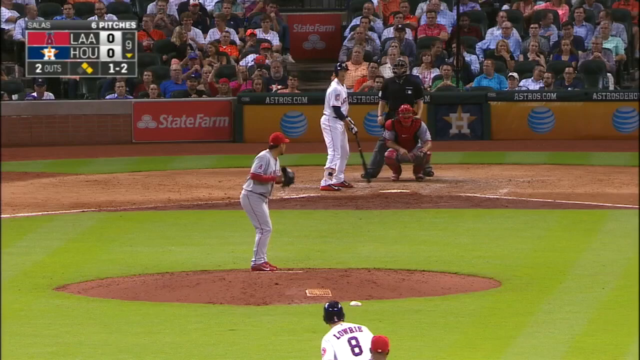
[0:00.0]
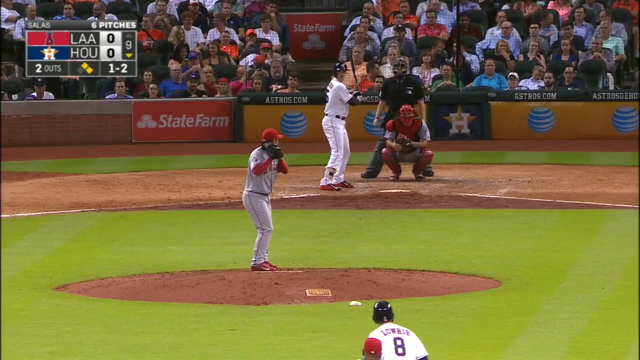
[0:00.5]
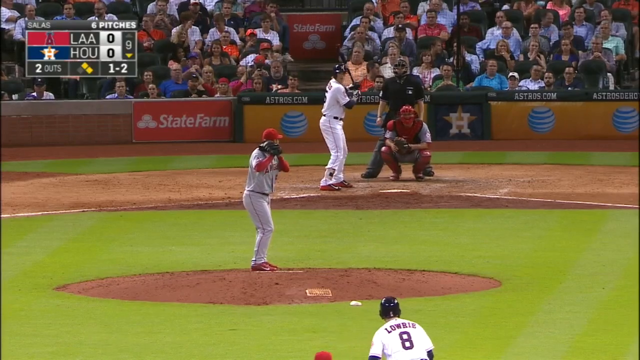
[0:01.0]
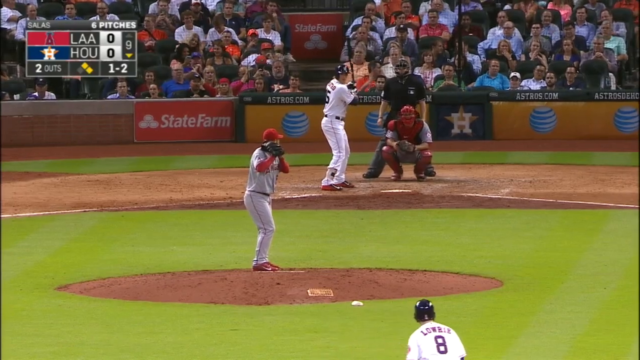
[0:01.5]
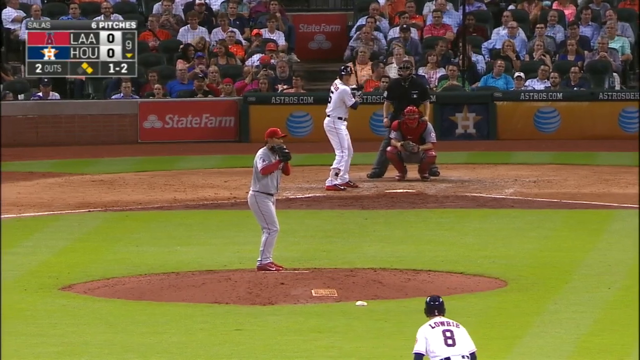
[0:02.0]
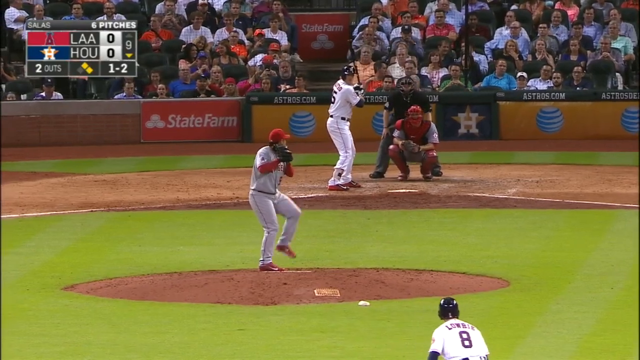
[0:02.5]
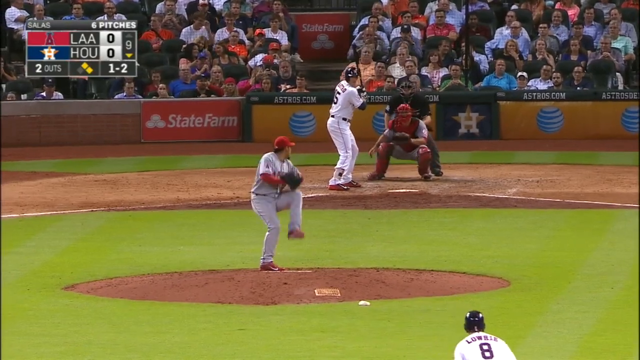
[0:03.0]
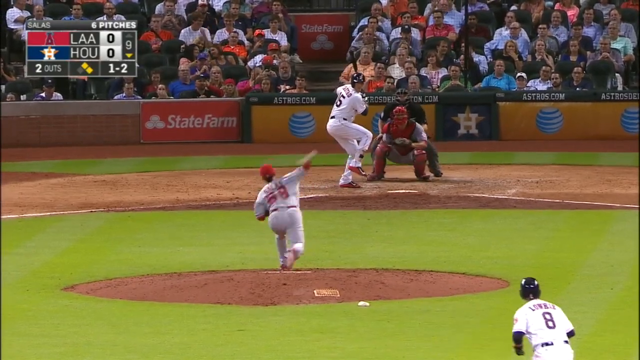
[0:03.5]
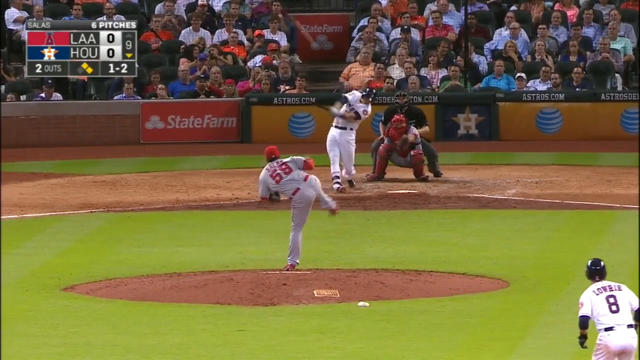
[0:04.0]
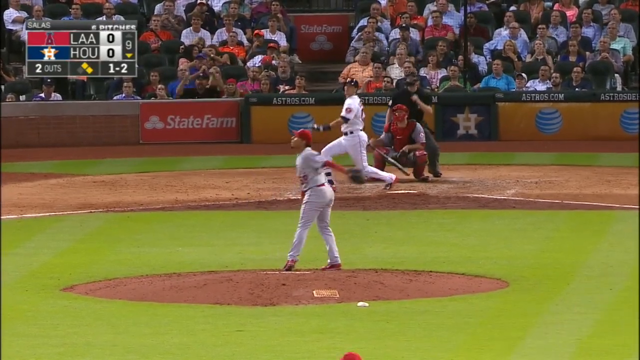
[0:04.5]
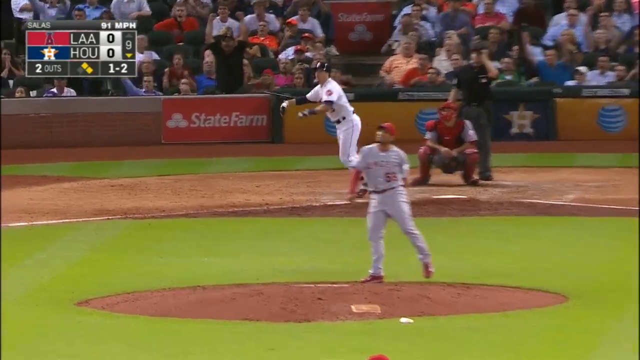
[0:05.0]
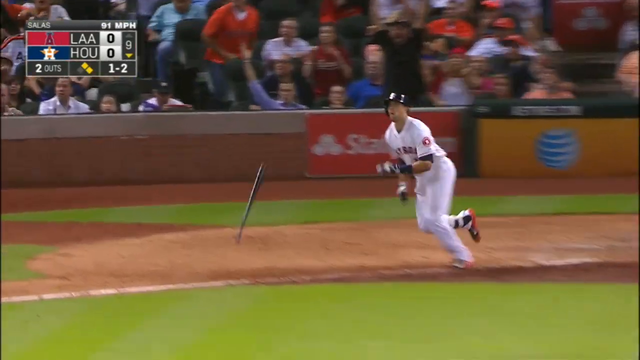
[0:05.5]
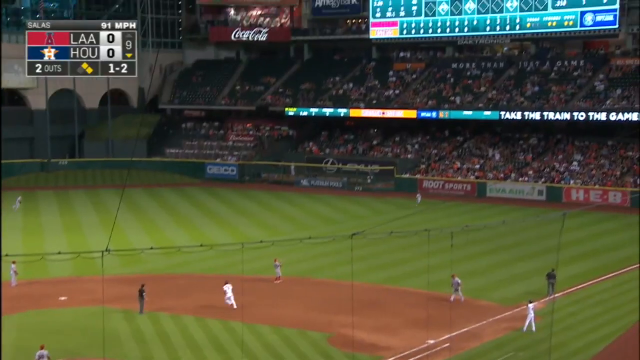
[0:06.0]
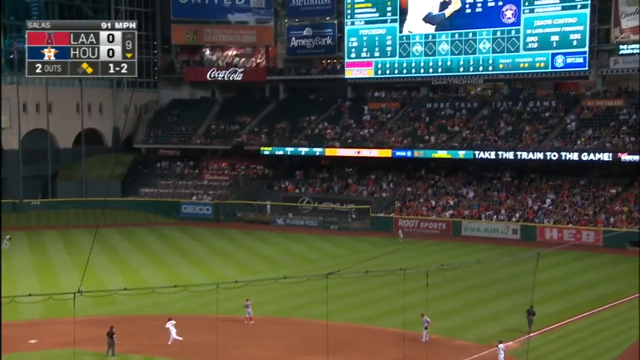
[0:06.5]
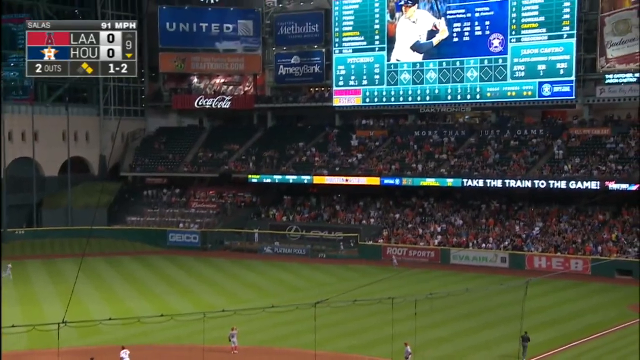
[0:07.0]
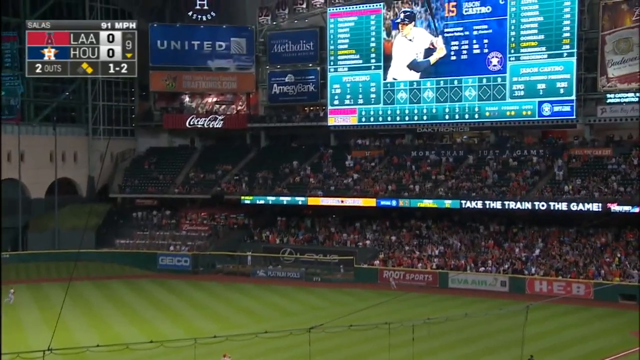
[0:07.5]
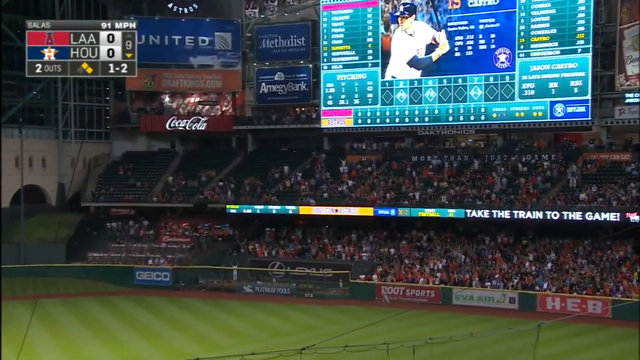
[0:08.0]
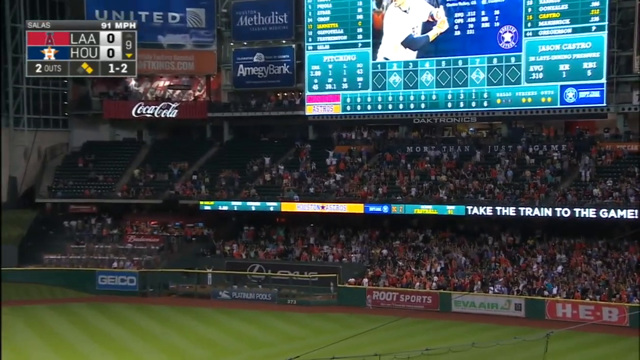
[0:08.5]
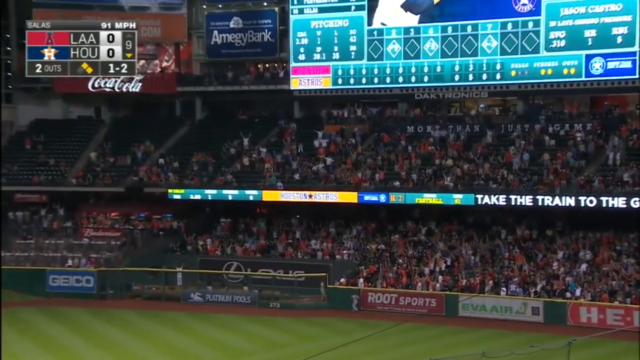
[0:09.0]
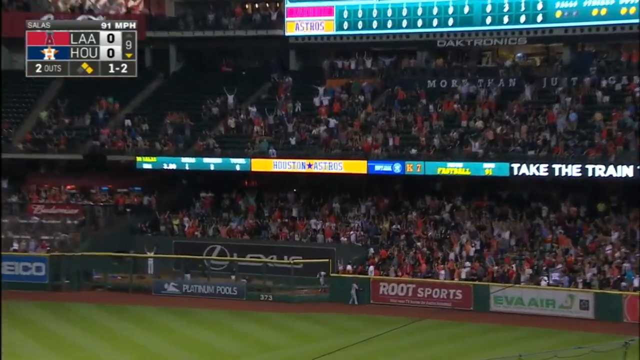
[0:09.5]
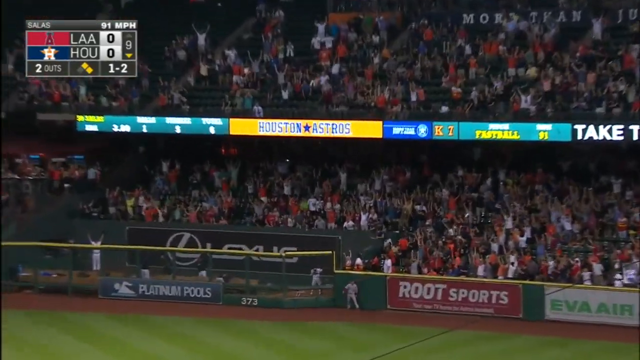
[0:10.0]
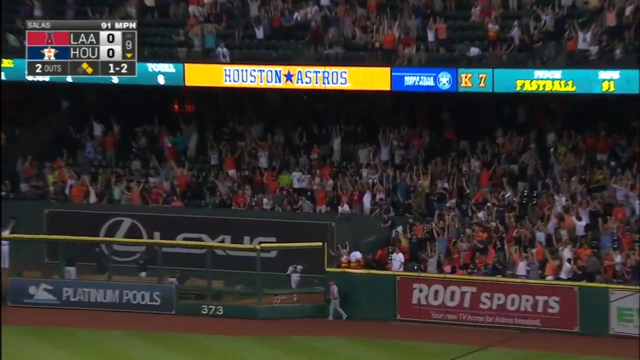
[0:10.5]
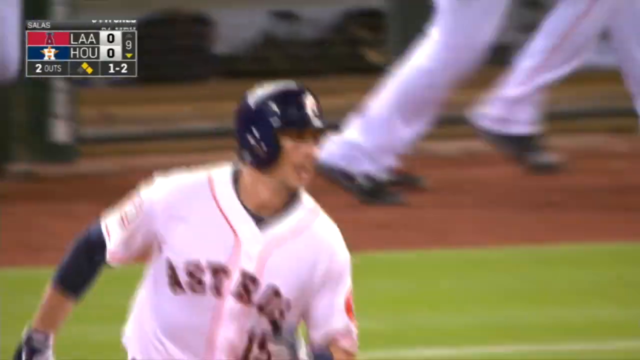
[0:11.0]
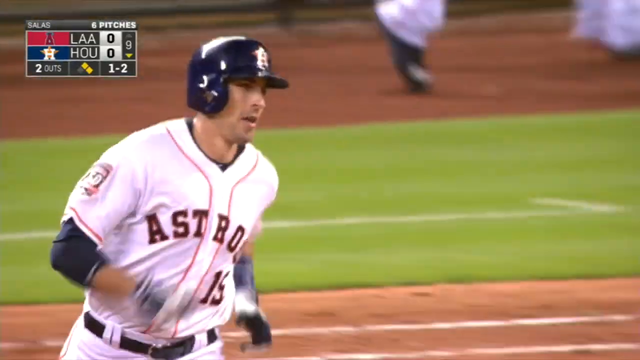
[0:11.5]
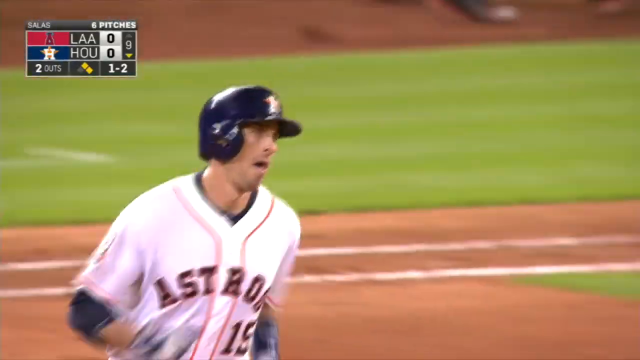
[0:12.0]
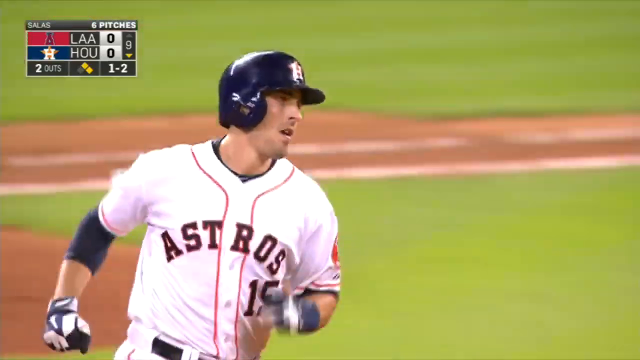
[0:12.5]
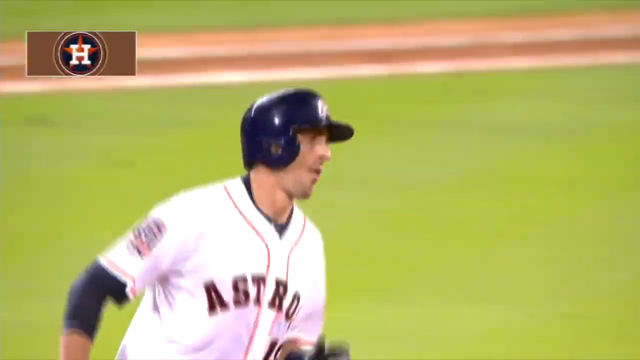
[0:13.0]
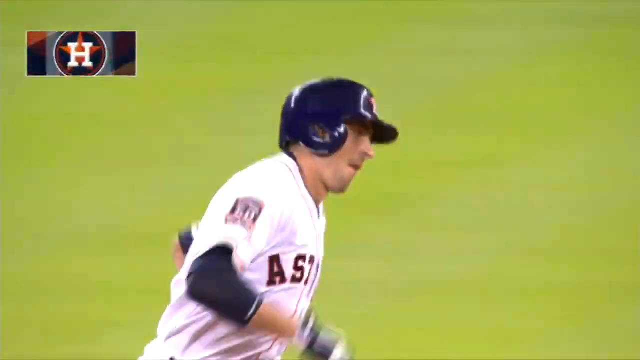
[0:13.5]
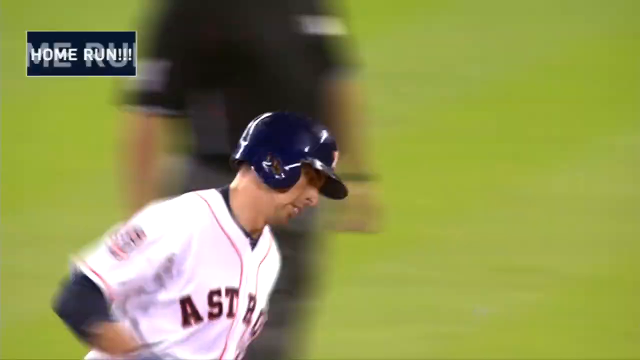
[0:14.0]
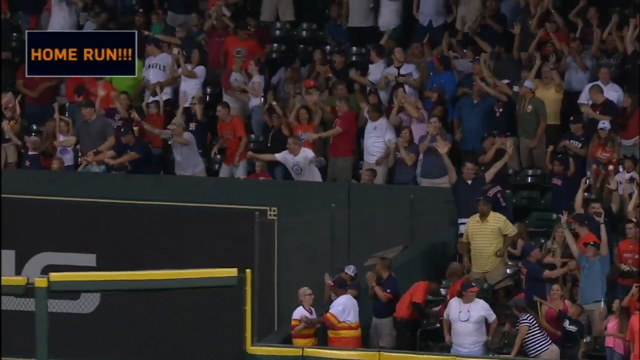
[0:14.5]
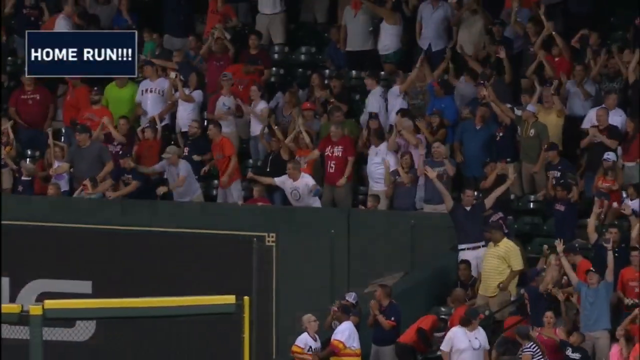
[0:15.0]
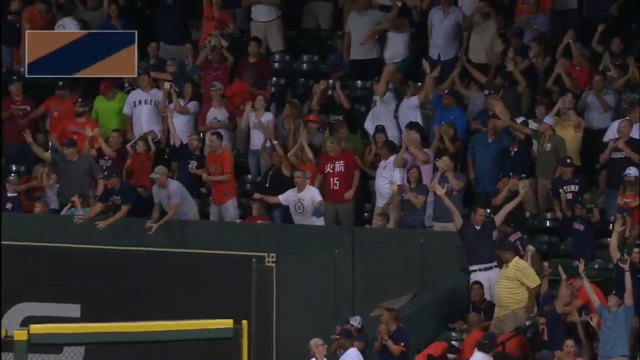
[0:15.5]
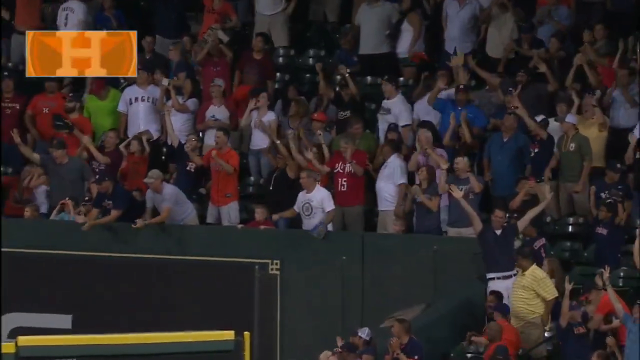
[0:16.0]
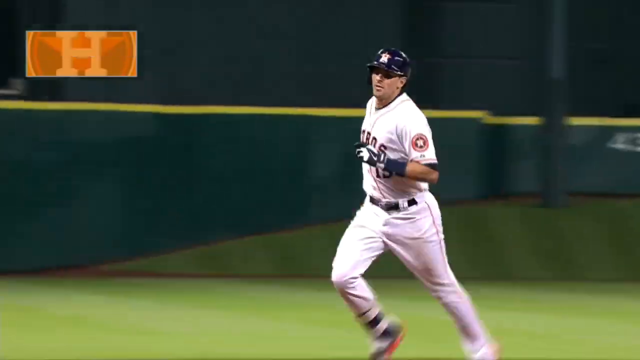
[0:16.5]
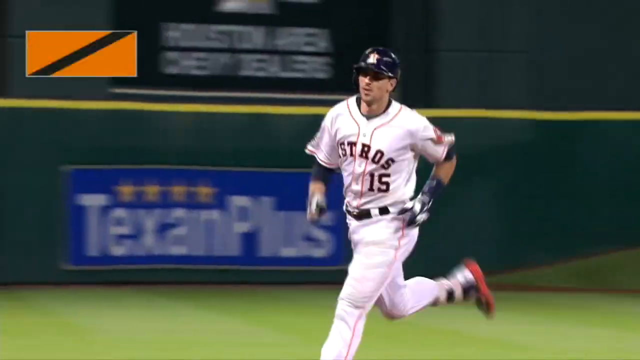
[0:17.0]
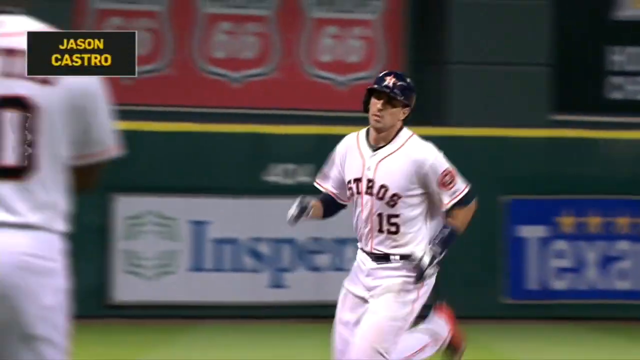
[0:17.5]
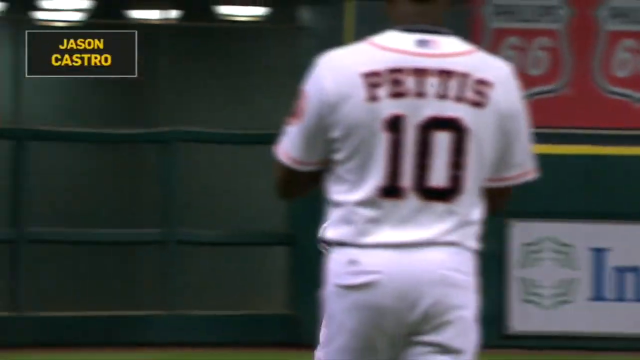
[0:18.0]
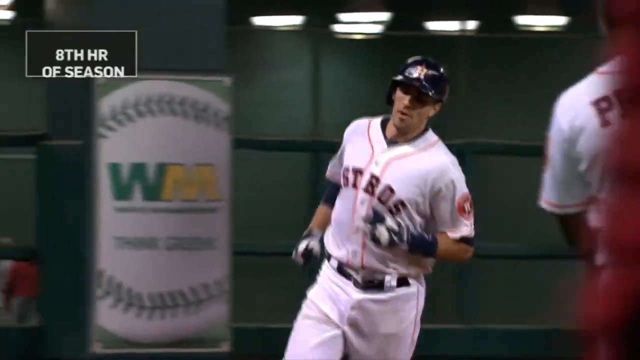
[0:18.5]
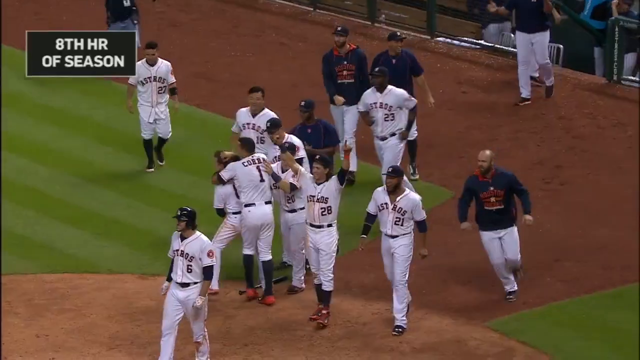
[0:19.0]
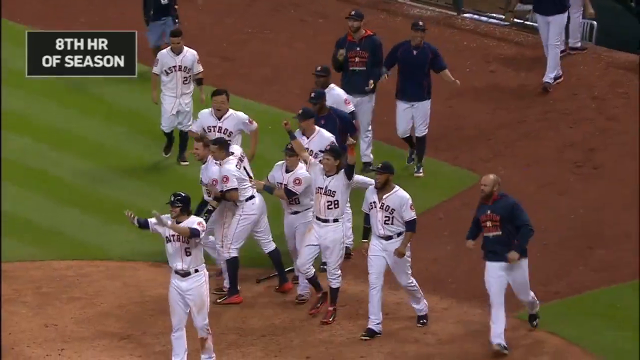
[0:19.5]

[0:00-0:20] A Major League Baseball game between the Los Angeles Angels and the Houston Astros, identified by the logos in the top left-hand corner: the Angels have a red logo with a blue outline, and the Astros have a dark blue background with a white H and an orange star behind the letter. The Angels pitcher gives up a deep home run to right field to a left-handed batter, number 15, Jason Castro, who hits it over the wall for his eighth home run of the season. The view pans out over the entire stadium, and the crowd behind home plate goes wild. Sponsorships include State Farm Insurance and AT&T.com, with AT&T's silver and blue circular ball logo.